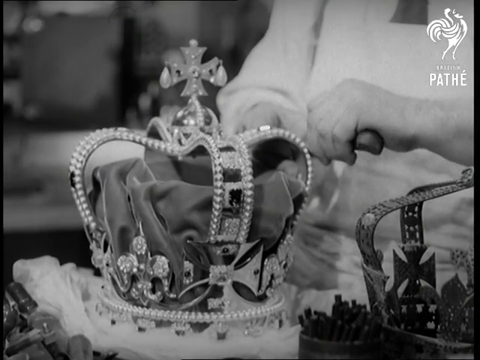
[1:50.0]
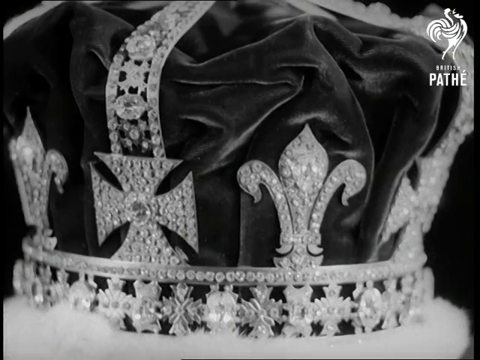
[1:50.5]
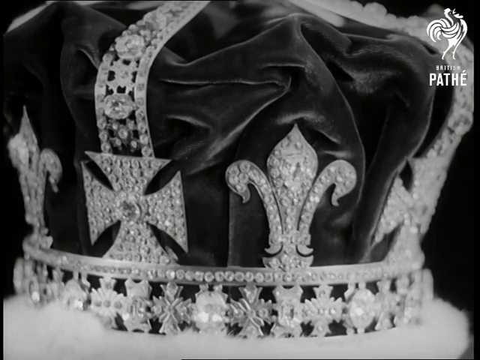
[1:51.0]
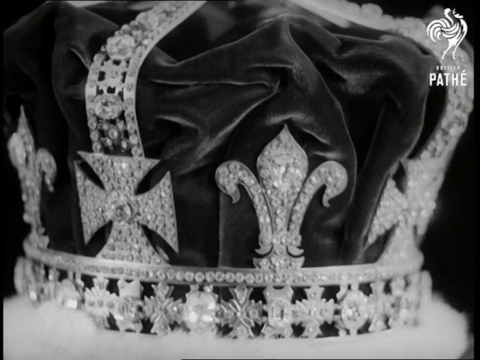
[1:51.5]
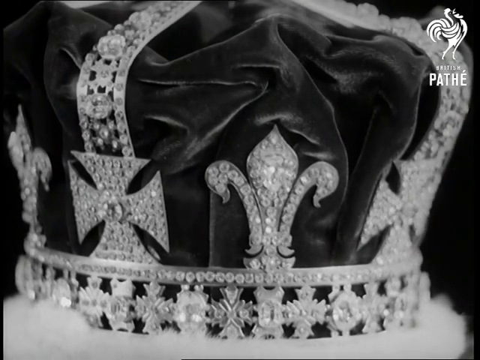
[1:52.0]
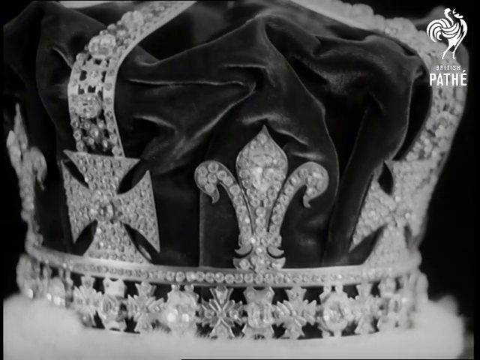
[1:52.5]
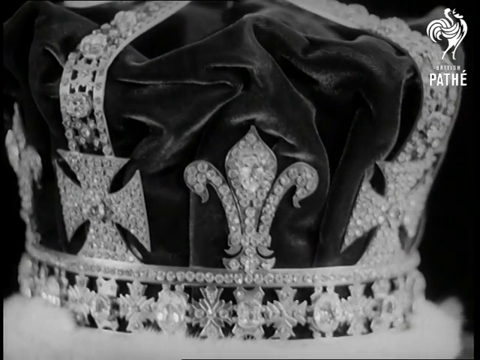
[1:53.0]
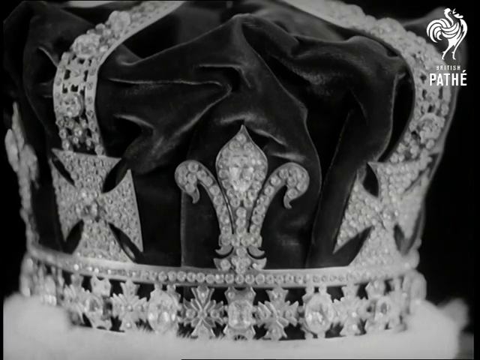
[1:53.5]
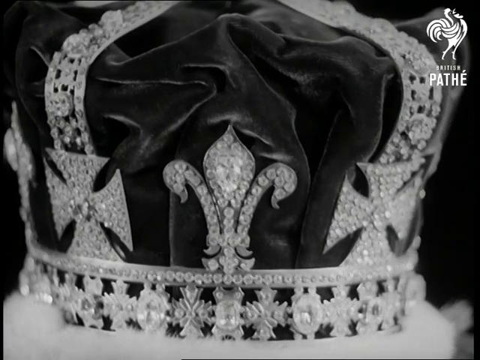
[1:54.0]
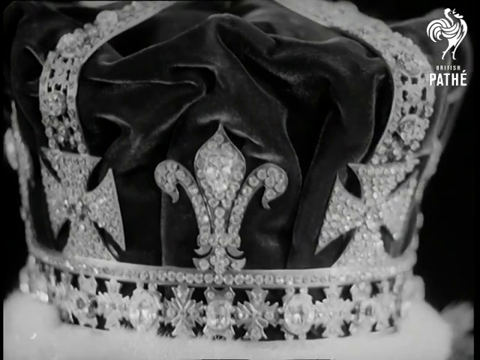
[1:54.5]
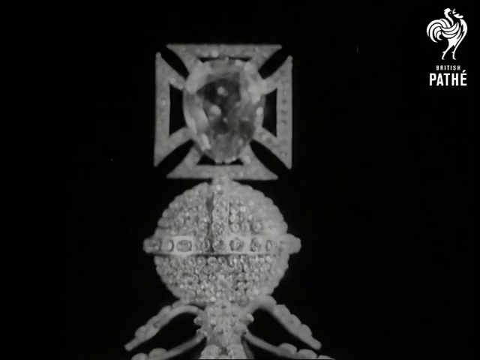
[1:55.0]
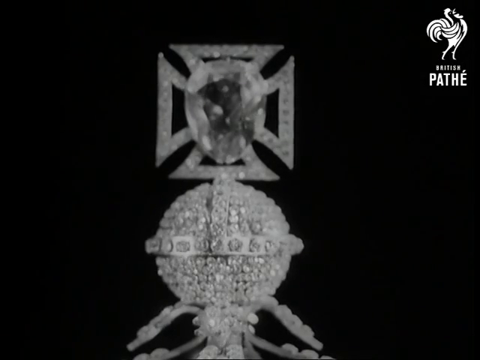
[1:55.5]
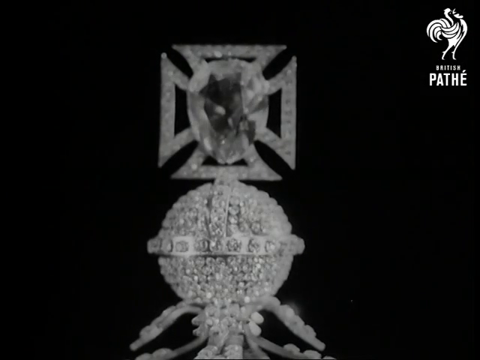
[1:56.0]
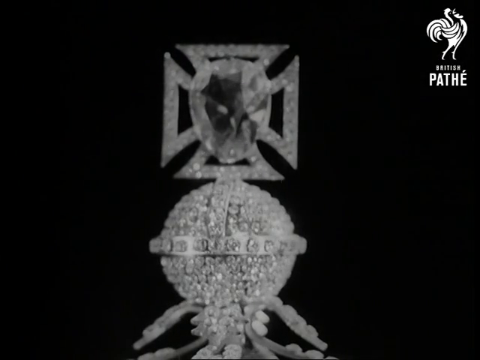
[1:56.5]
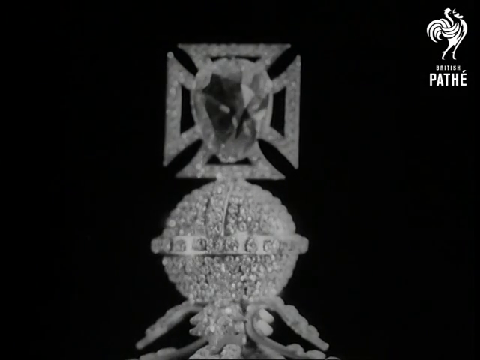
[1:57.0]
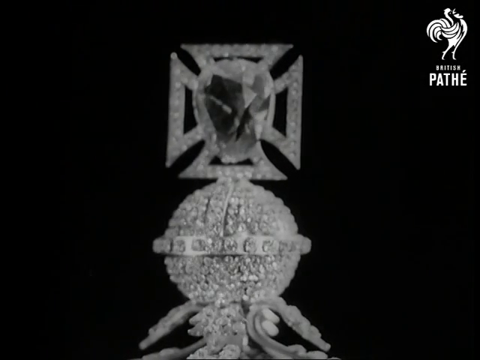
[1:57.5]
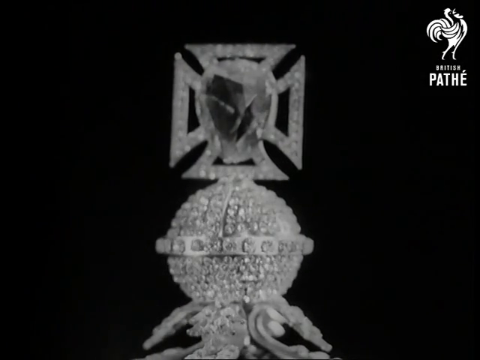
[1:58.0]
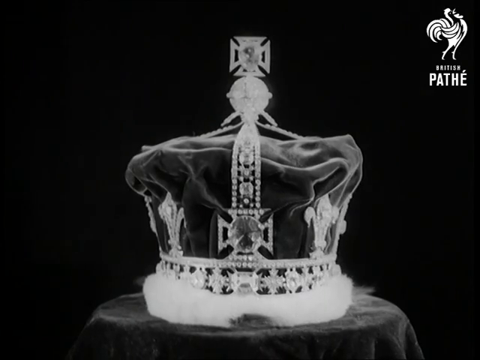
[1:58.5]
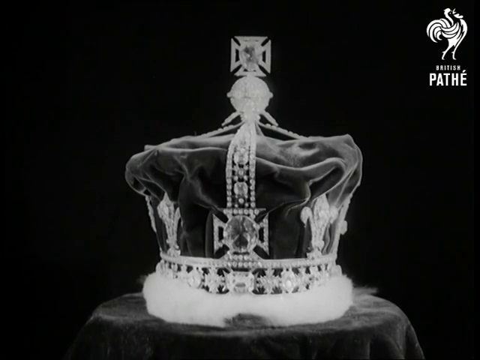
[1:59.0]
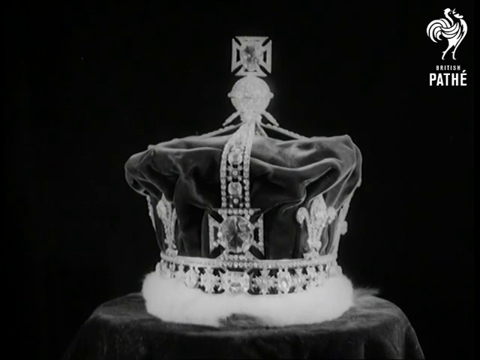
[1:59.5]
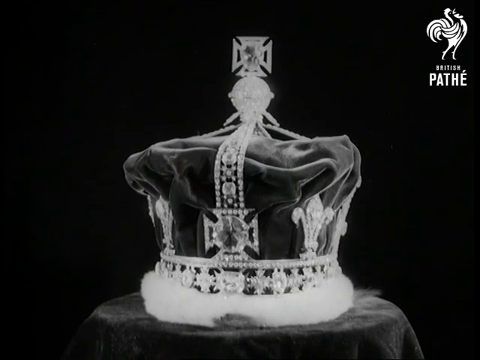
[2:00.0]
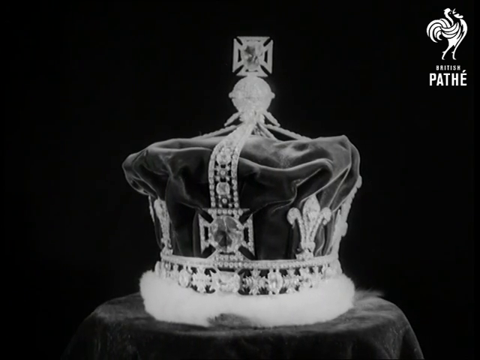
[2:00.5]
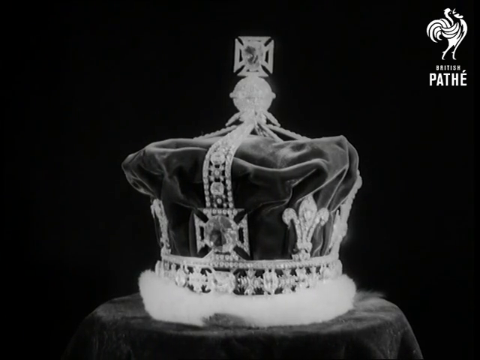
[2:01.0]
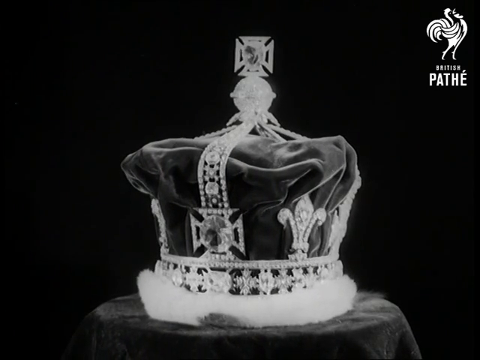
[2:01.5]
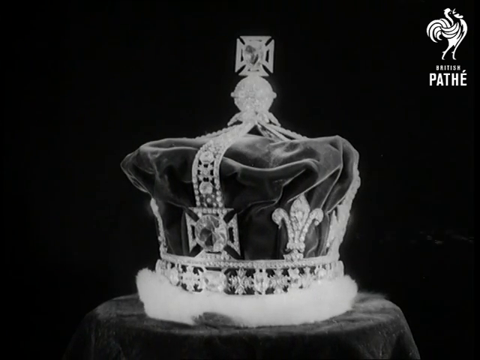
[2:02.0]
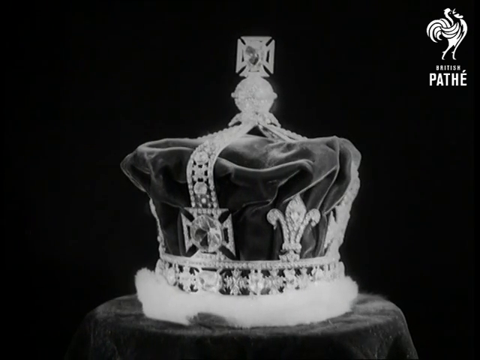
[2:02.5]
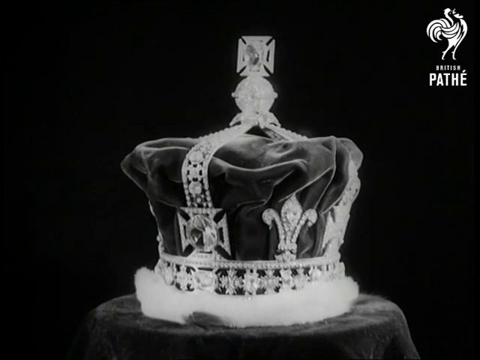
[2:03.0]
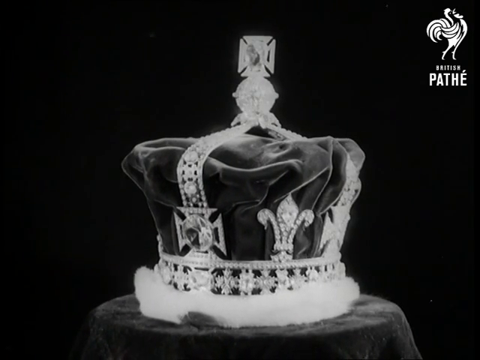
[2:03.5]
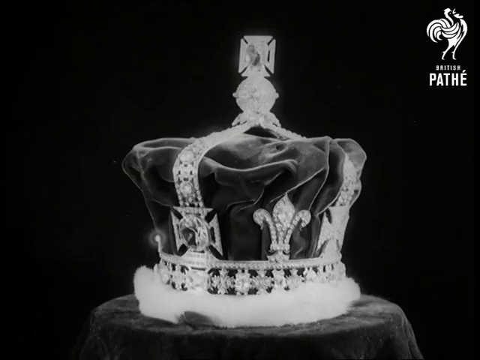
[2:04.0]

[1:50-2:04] A crown is on some sort of pedestal on a display that keeps revolving slowly from right to left, counterclockwise. It has a cross and a lot of jewels that appear to glow, and what looks like a plush material, possibly red, though the black and white footage makes the colour impossible to see. A close-up shows the top piece of the crown, a cross with a thick diamond or gem, before a fuller view of the crown.